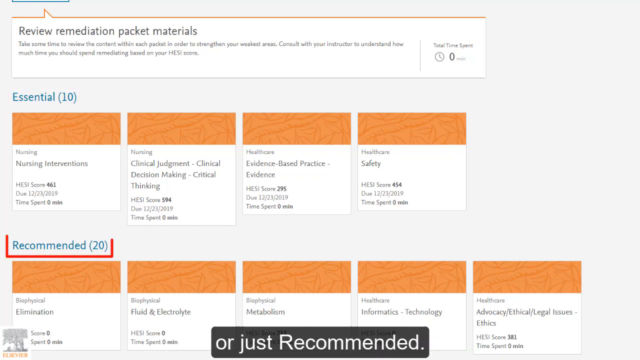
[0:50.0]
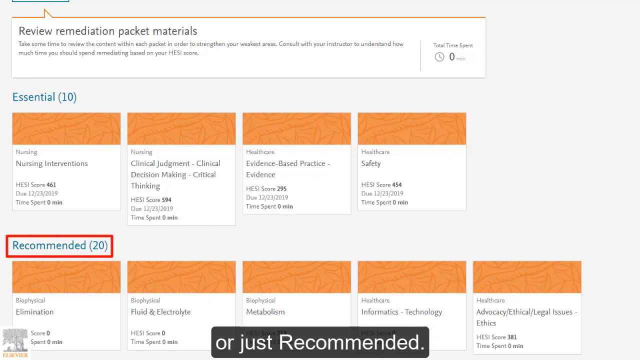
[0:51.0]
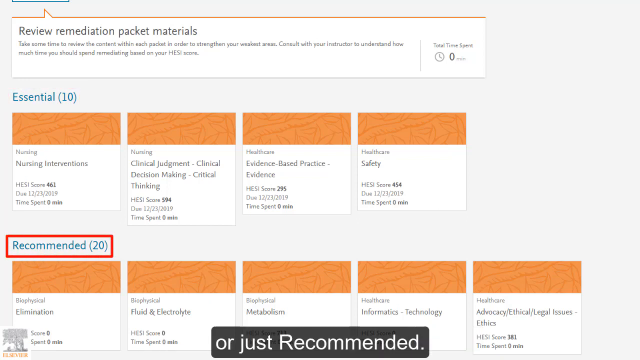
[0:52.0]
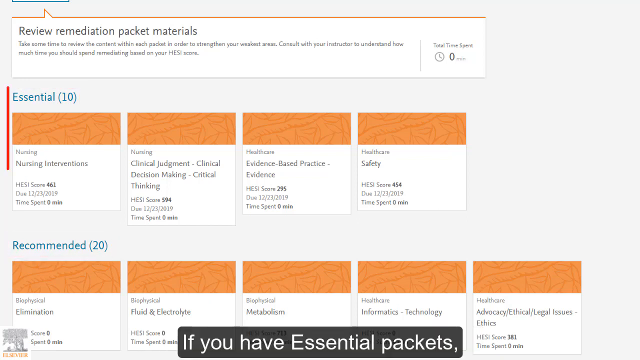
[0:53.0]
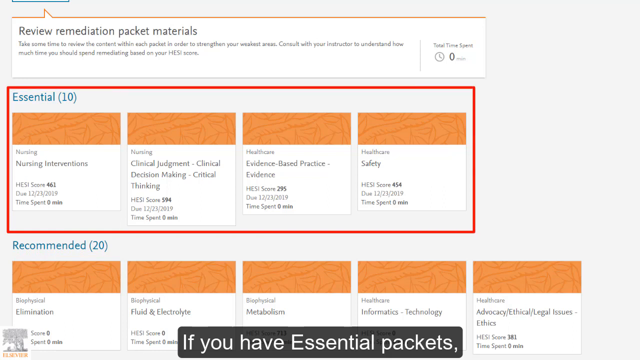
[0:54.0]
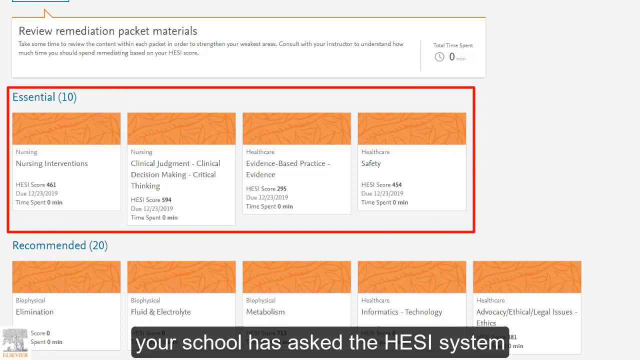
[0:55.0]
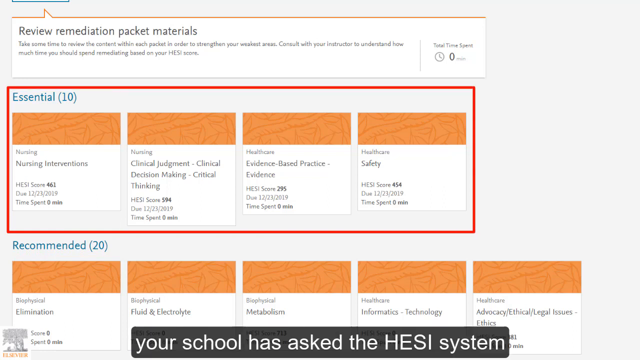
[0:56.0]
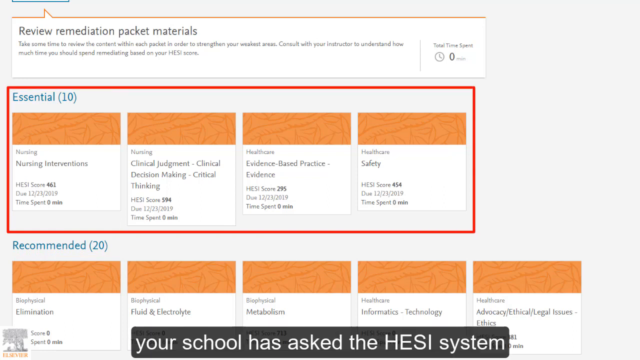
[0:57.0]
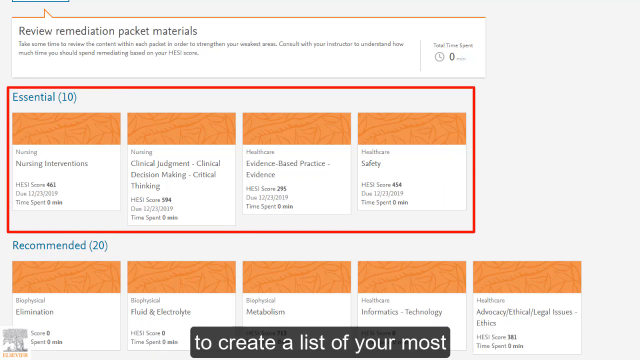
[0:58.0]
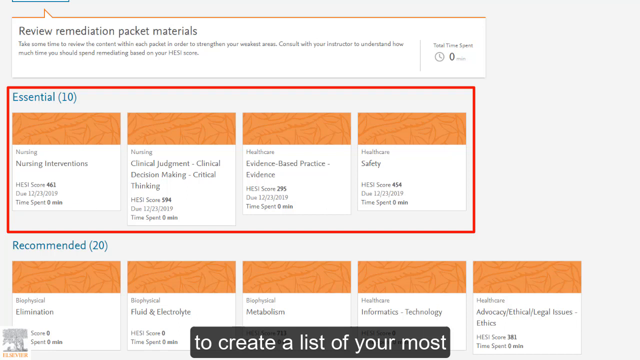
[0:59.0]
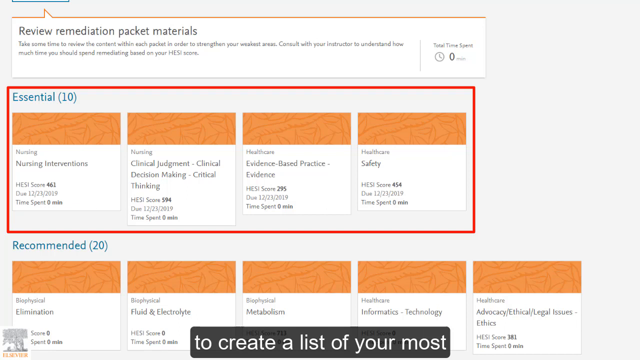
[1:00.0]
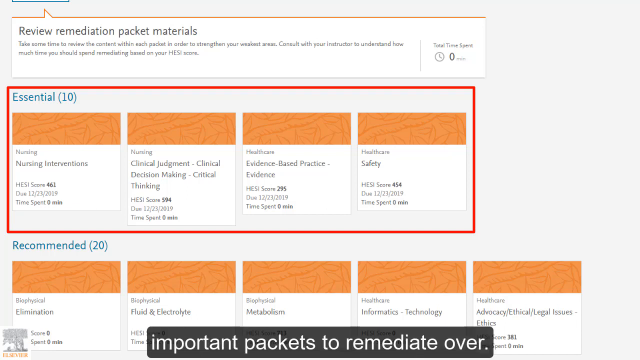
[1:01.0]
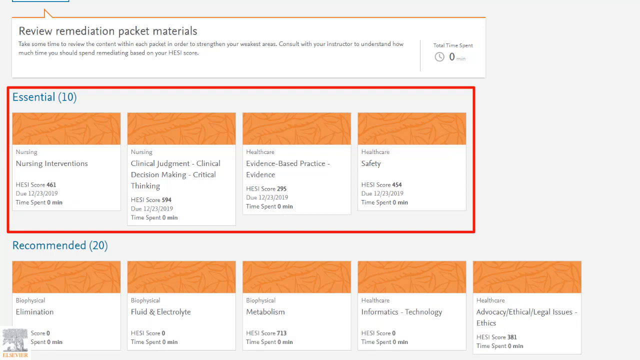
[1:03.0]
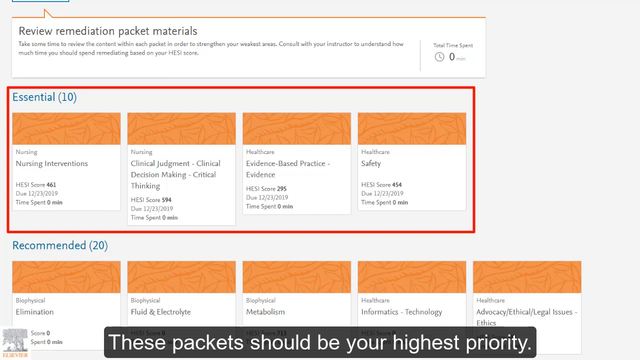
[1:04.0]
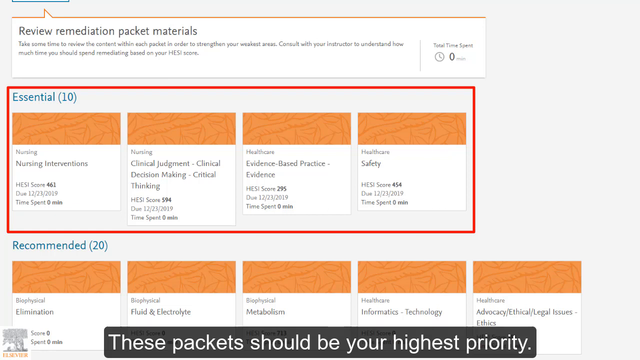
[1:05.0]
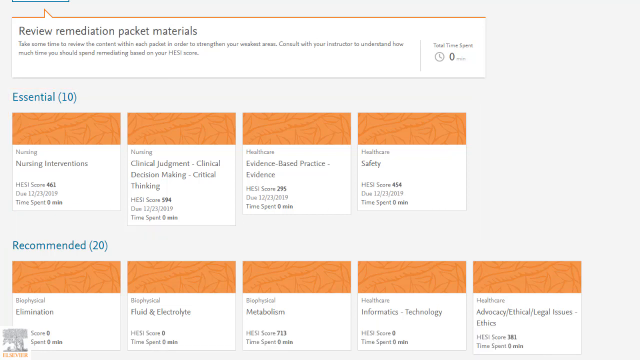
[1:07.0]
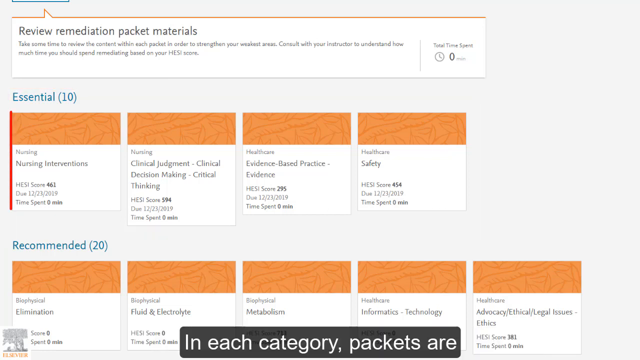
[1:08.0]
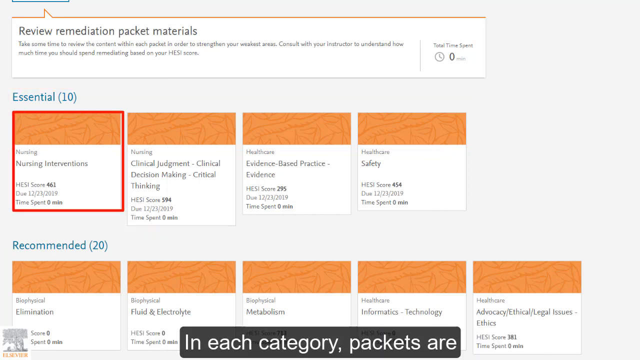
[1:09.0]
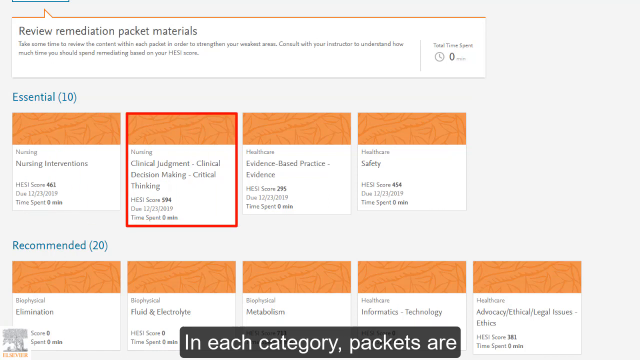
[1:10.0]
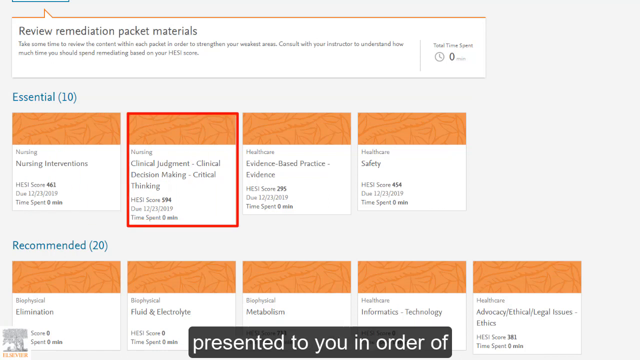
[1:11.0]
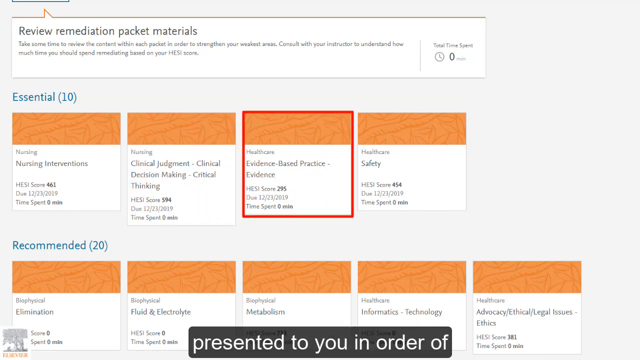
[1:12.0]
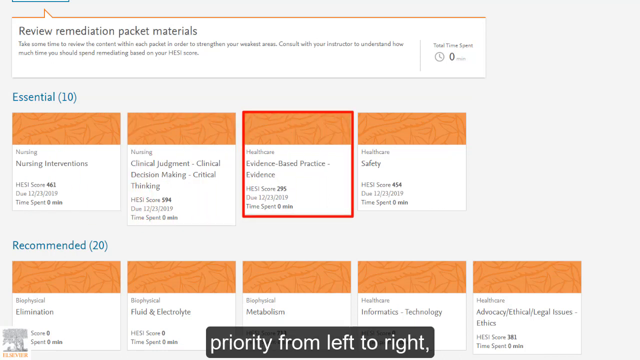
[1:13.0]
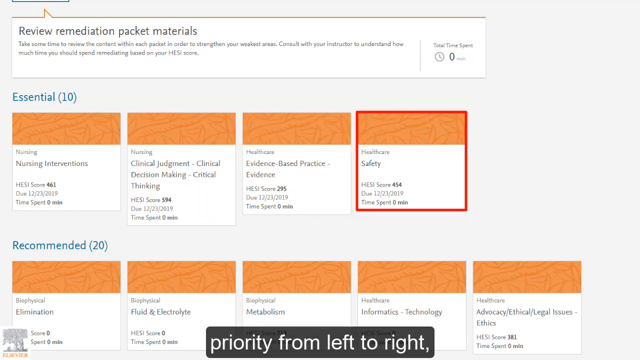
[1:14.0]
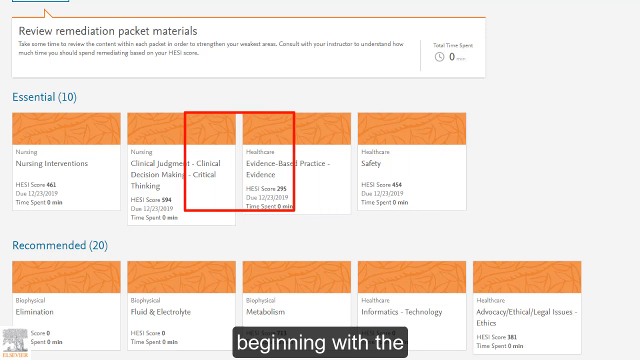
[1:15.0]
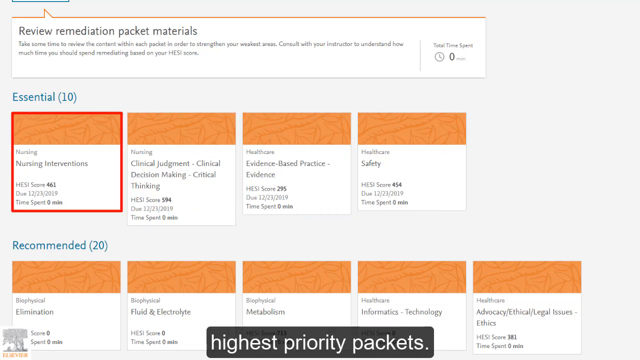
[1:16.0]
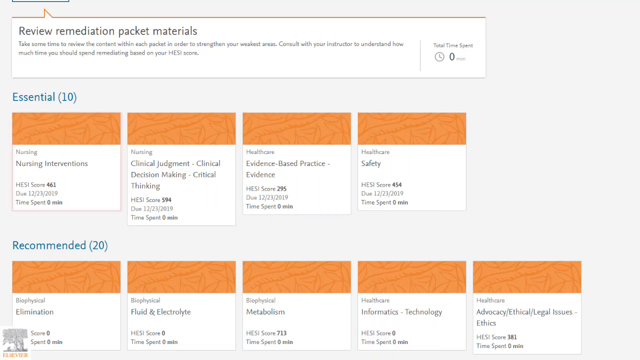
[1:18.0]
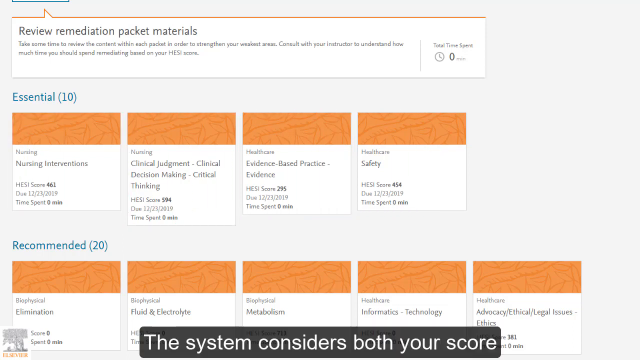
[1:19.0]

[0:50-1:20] The portal shows the review remediation packet materials page. Under Essential 10 are nursing intervention, nursing clinical judgments, clinical decision-making, critical thinking, health care evidence-based practice and health care safety. Under Recommended 20 are biophysical elimination, biophysical fluid and electrolytes, biophysical metabolism, health care informatics technology, and health care advocacy/ethical/legal issues, ethics. Text reads "If you have essential packets, your school asked HESI to create a list of your most important packets to remediate over. These packets should be your highest priority. In each category, packets are presented to you in order of priority from left to right, beginning with the highest priority packet. The system considers both your score."